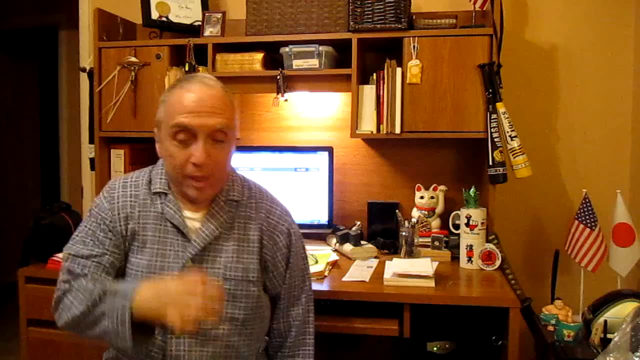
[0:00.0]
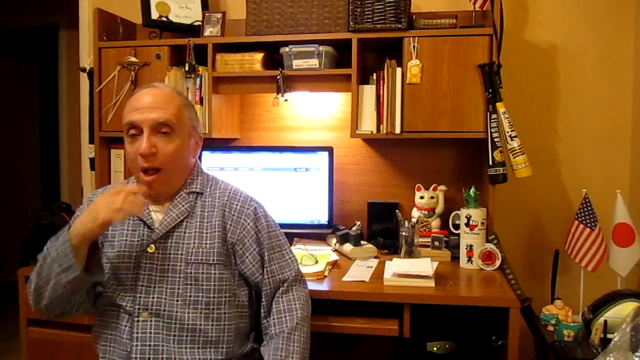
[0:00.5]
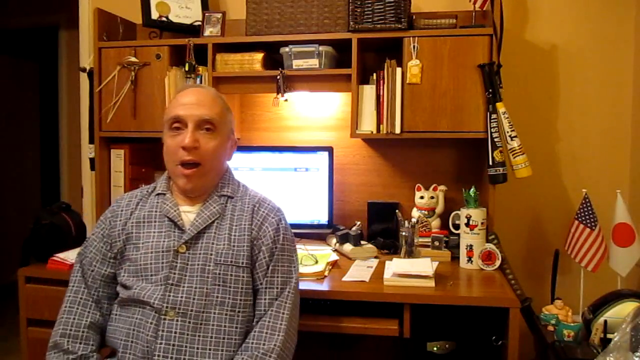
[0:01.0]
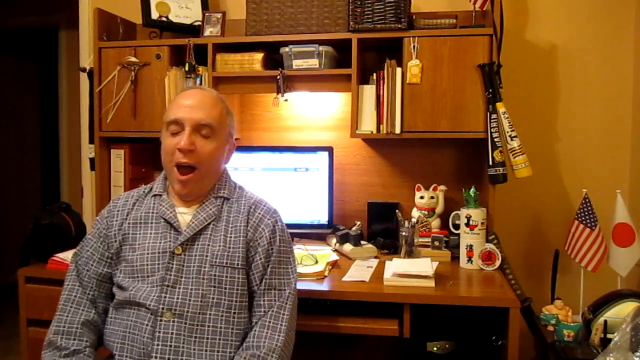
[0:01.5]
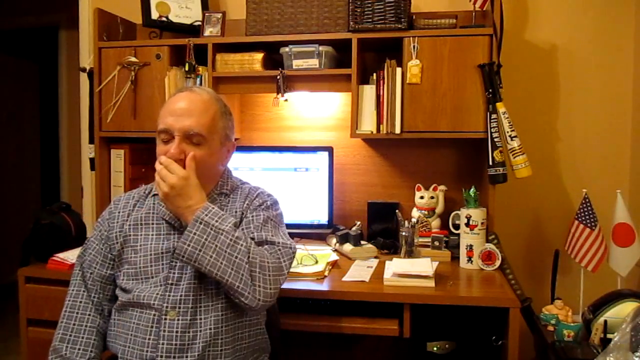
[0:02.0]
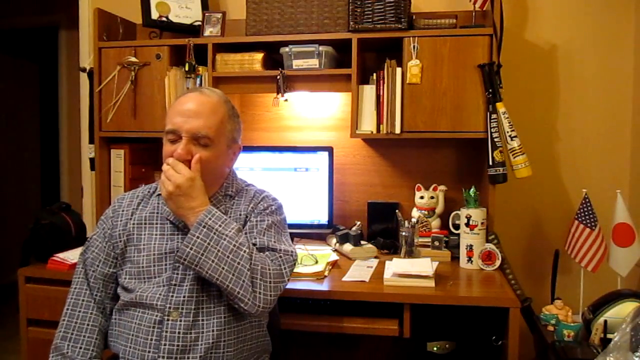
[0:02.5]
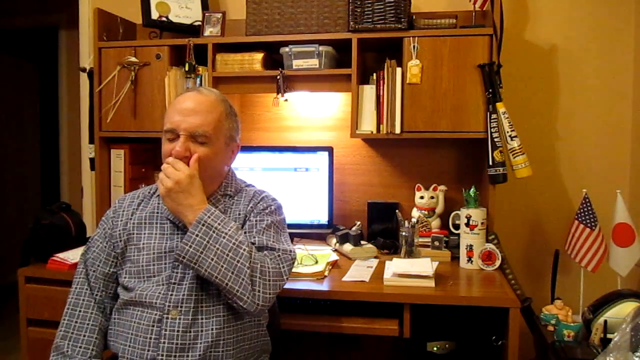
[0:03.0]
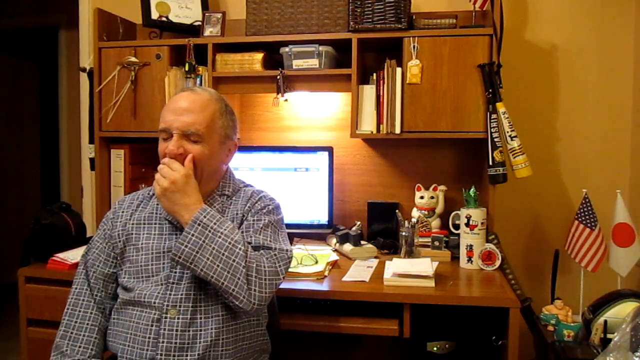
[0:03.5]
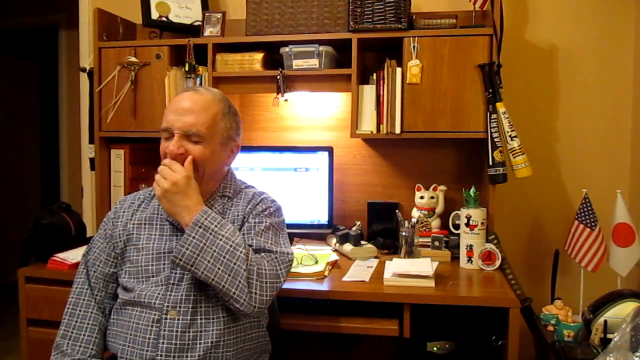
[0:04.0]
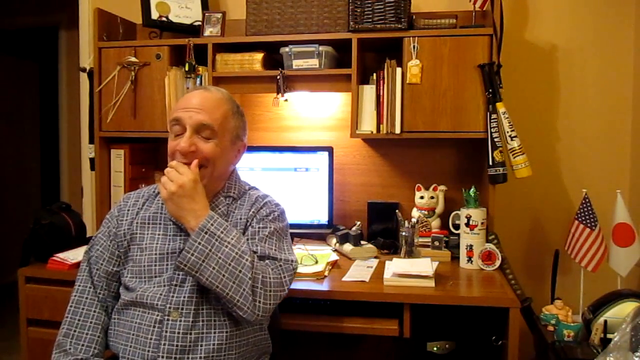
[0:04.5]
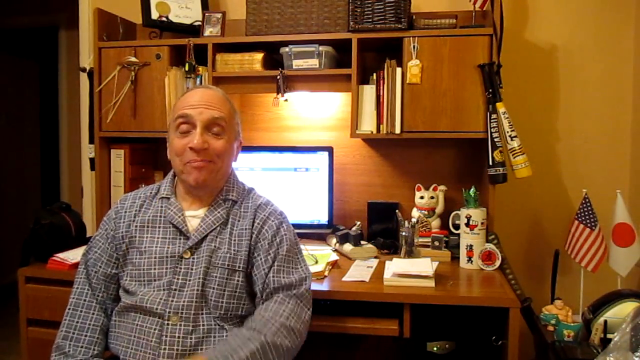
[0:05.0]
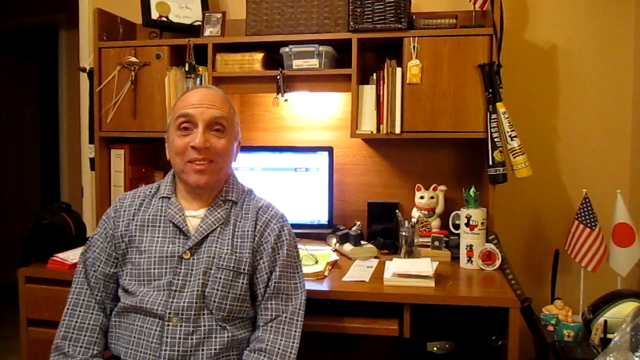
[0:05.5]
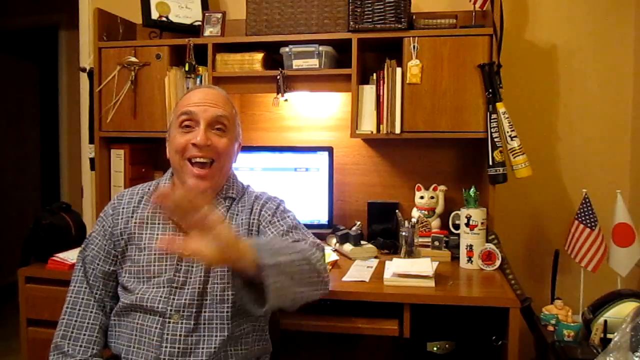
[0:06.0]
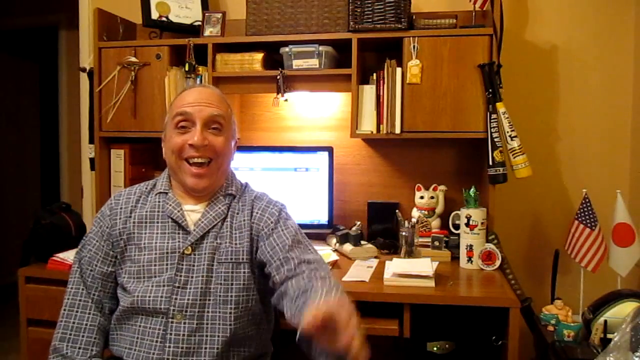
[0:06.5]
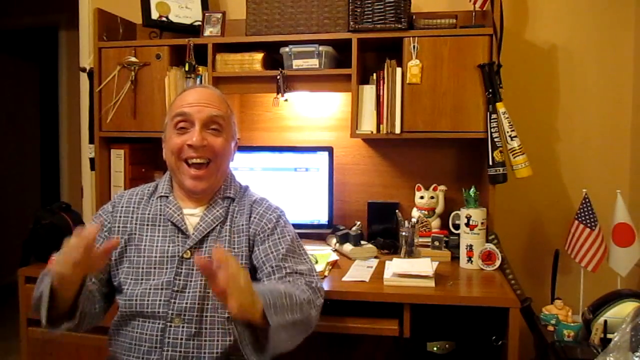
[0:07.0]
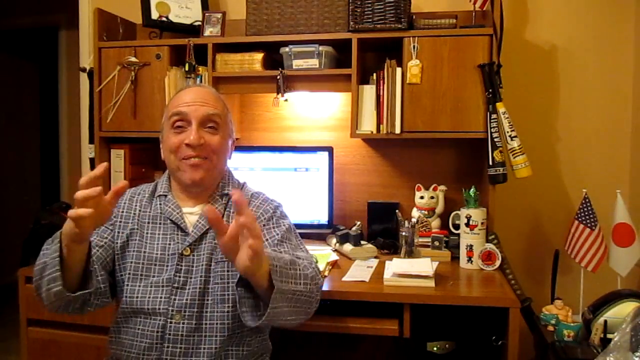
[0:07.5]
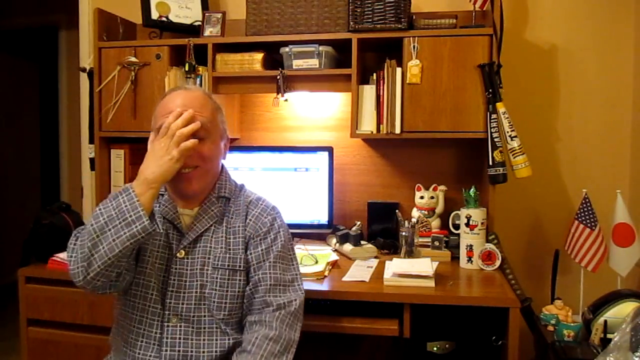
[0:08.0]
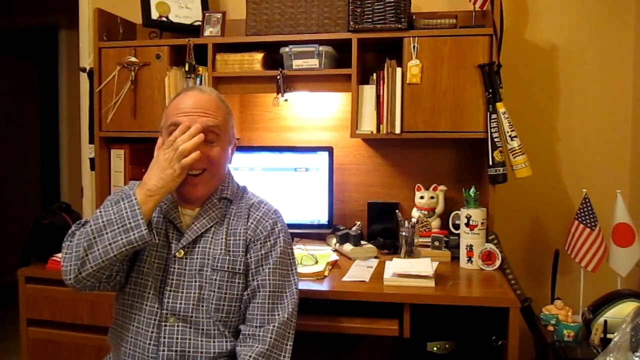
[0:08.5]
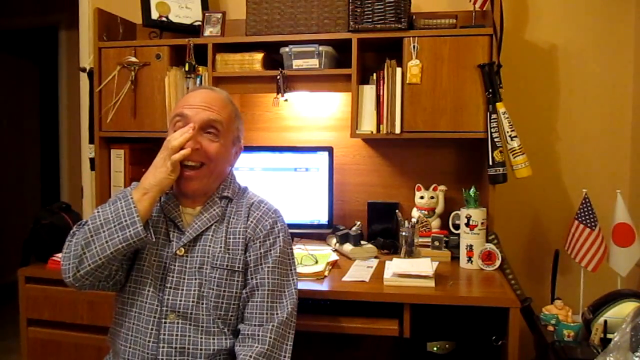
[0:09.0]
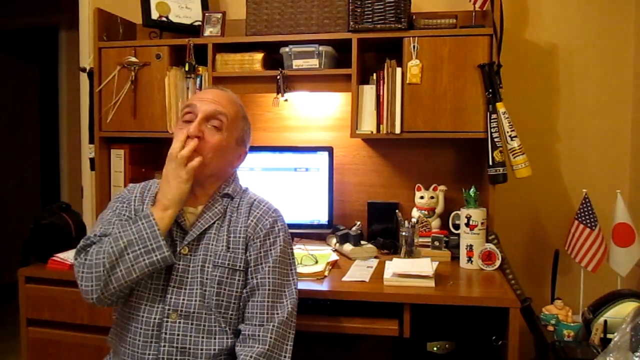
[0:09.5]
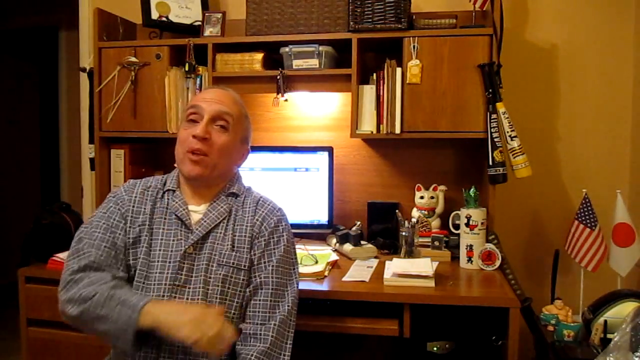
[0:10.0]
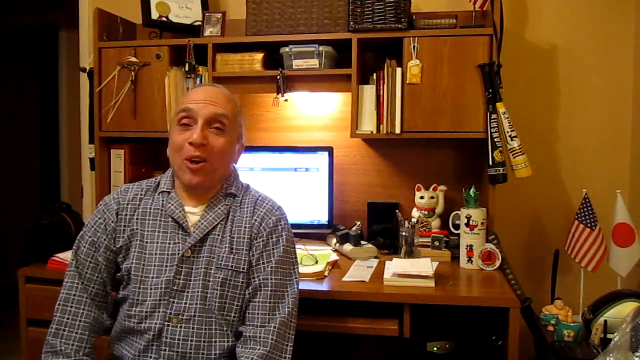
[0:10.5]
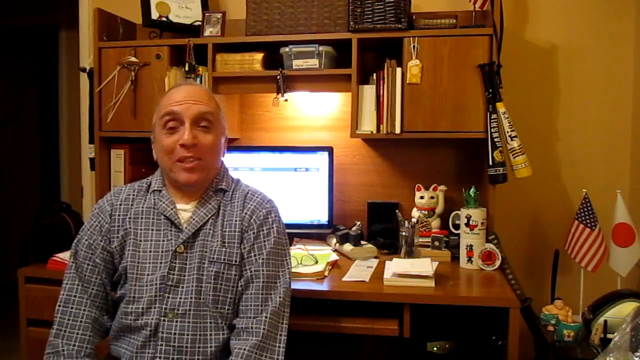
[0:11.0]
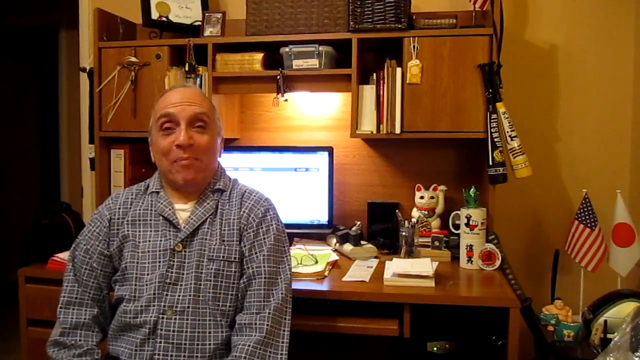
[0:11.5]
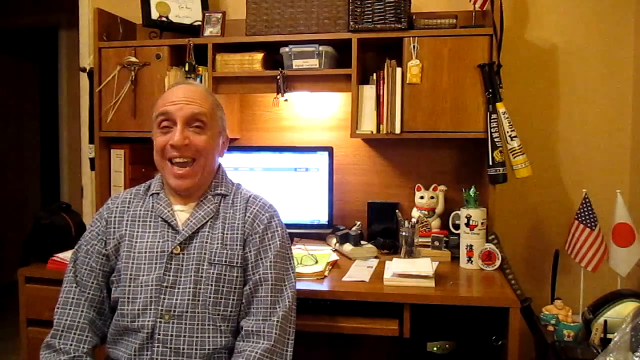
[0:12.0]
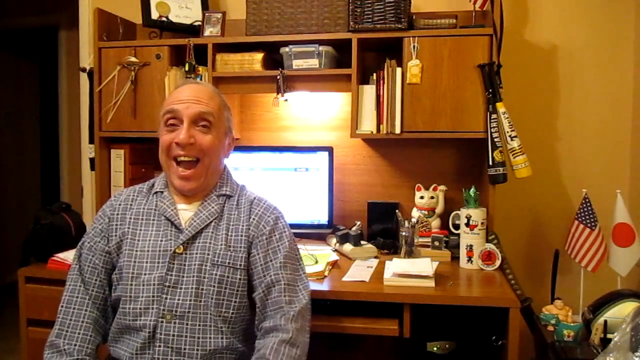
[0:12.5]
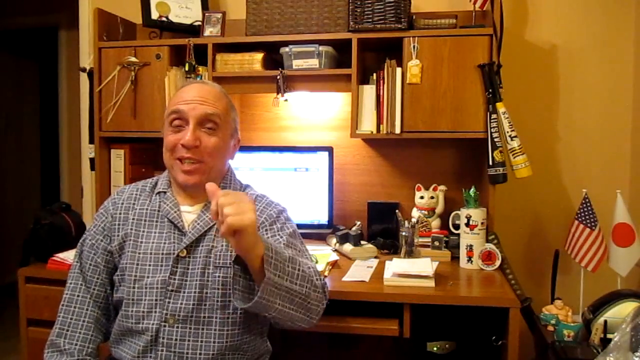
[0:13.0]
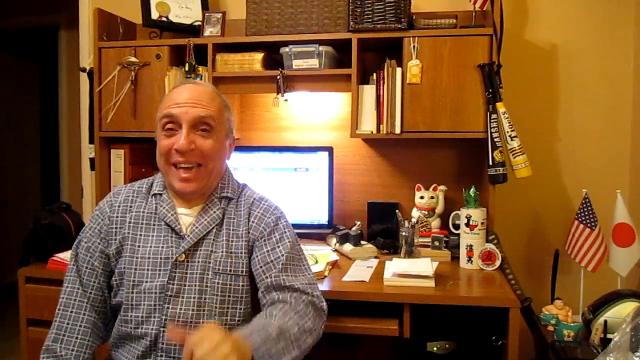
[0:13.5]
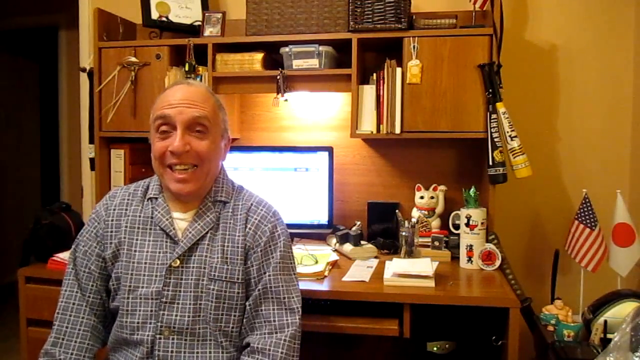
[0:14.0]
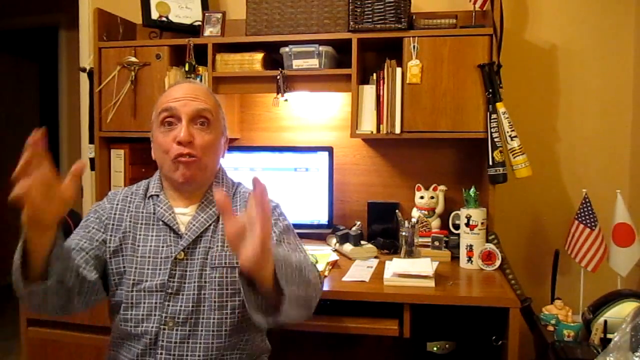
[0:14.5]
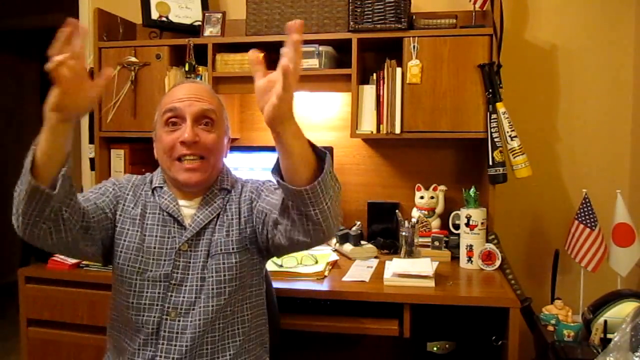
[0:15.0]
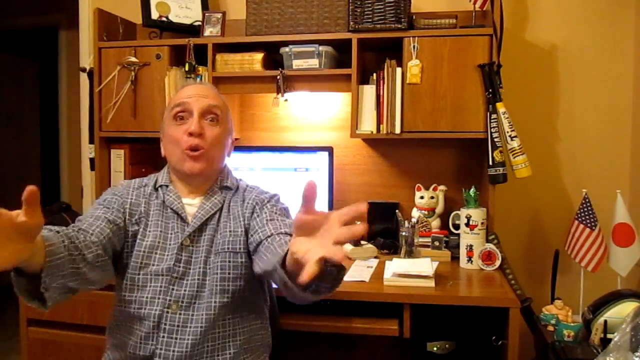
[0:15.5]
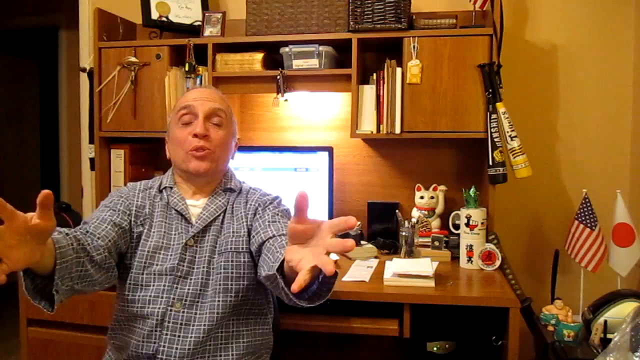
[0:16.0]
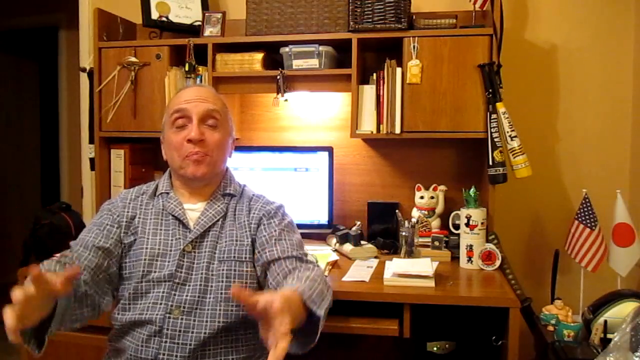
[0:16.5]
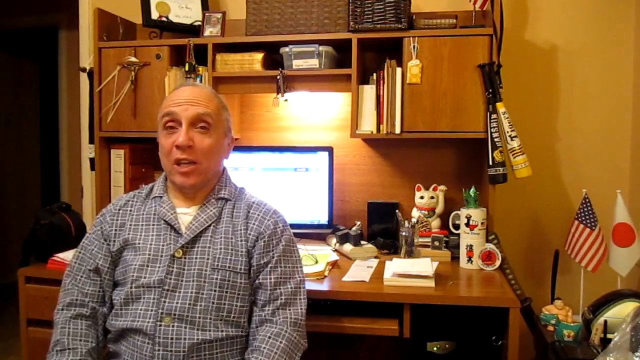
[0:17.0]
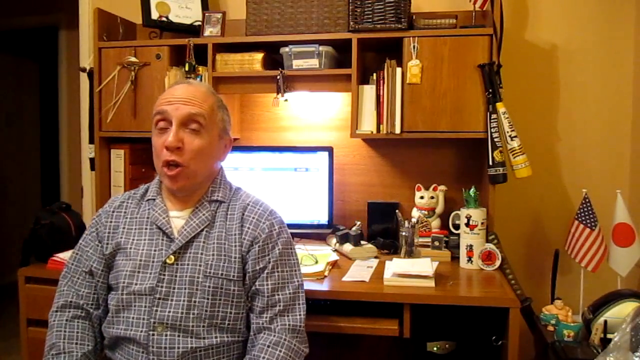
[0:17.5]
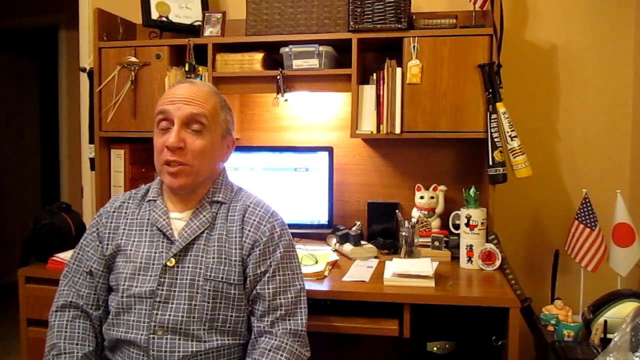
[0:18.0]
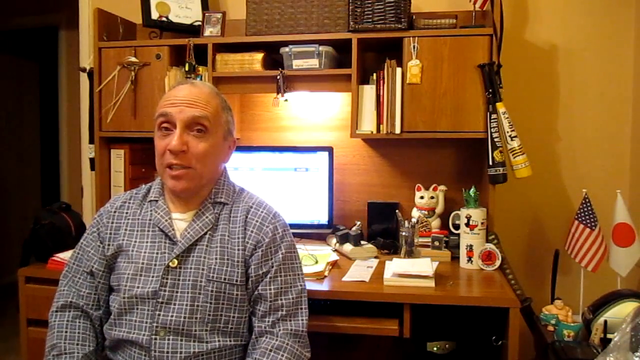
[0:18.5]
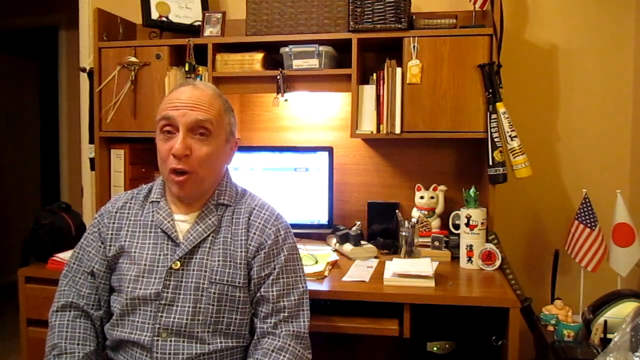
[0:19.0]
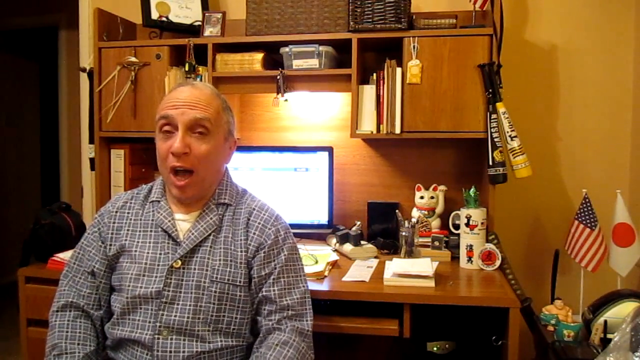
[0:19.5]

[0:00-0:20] A bald man sits inside a room with a desk, kind of waving his hands around. He wears a plaid, checkered blue shirt. Behind him is a cat along with various details such as a mug, an American flag and a Japanese flag, and two different baseball bats. On the cabinet behind him there are also a cover, a basket, some pictures and various other details. The man is somewhat on the larger side, between middleweight and fat. He is probably middle-aged, between 50 and 60, and looks white. He seems to be talking into the camera in a lively way, yawning at first, then kind of smiling and waving at the camera energetically.